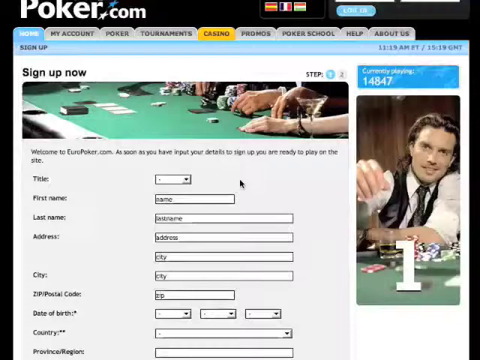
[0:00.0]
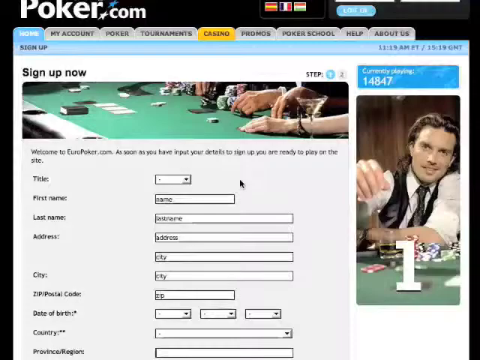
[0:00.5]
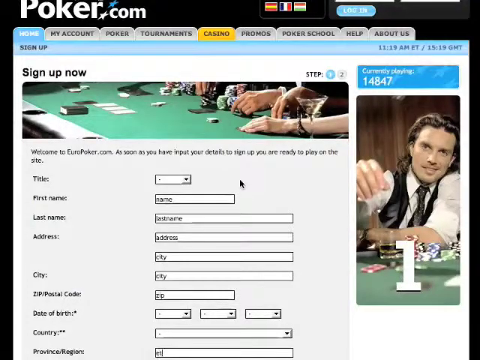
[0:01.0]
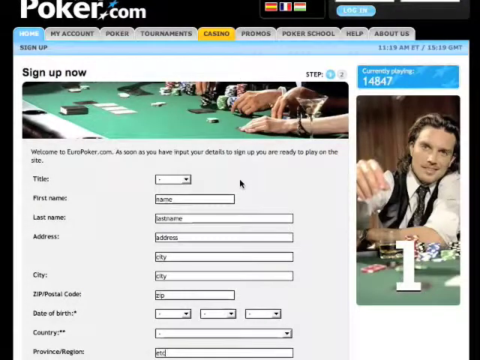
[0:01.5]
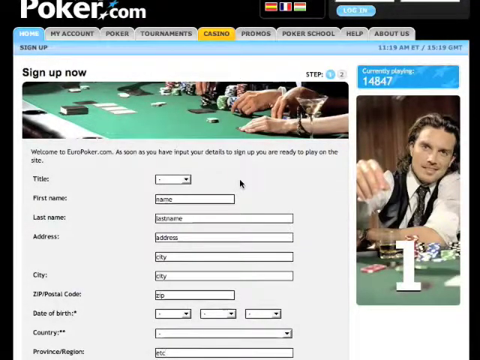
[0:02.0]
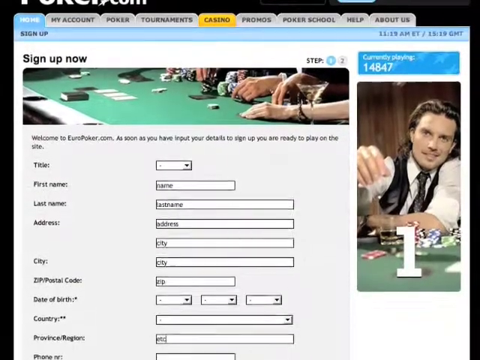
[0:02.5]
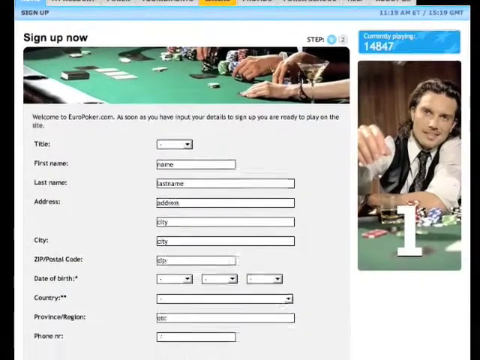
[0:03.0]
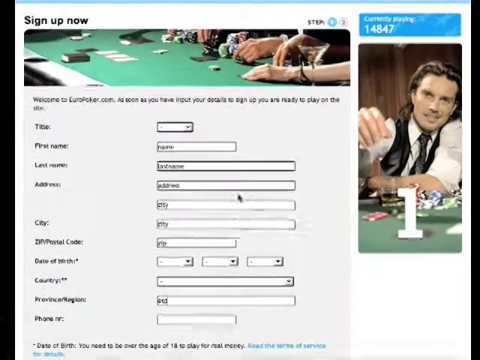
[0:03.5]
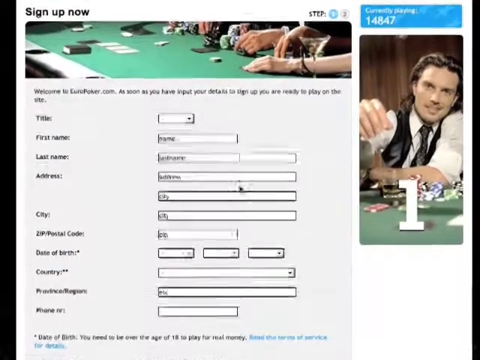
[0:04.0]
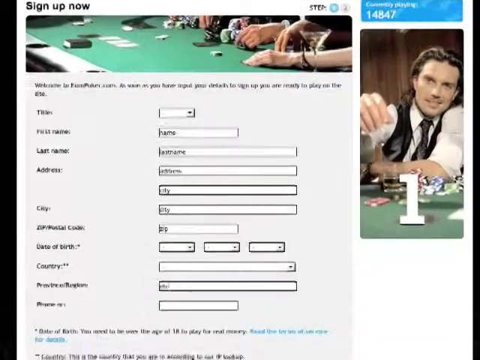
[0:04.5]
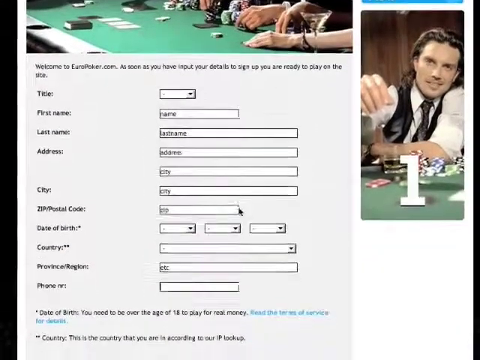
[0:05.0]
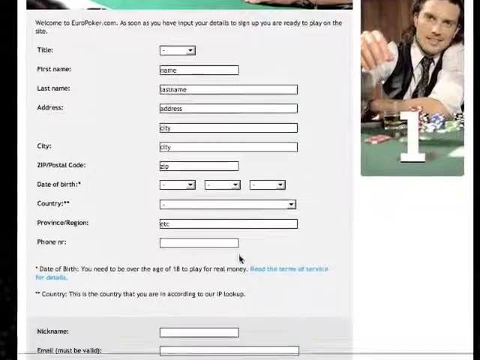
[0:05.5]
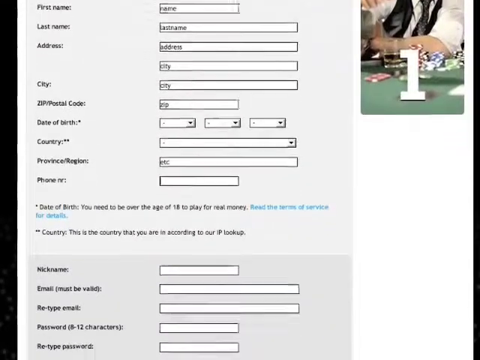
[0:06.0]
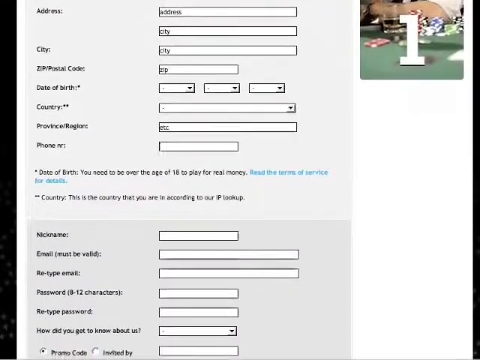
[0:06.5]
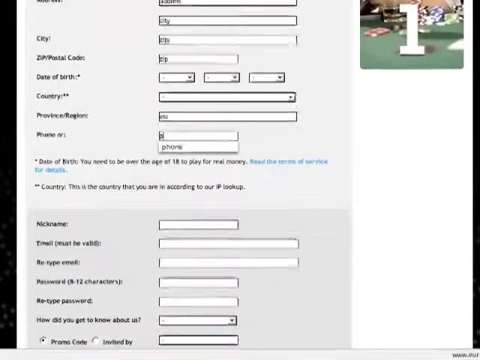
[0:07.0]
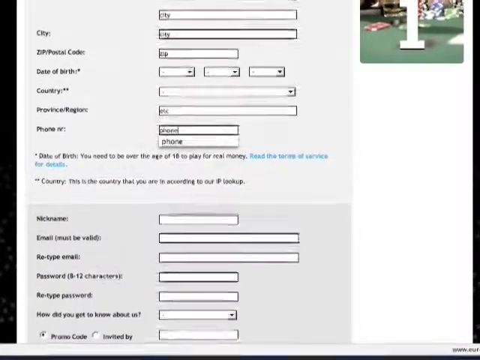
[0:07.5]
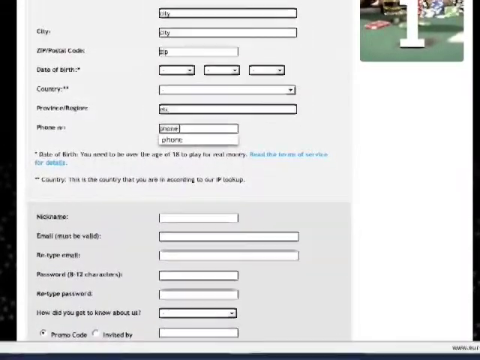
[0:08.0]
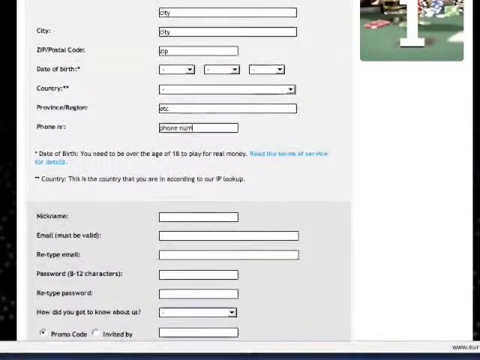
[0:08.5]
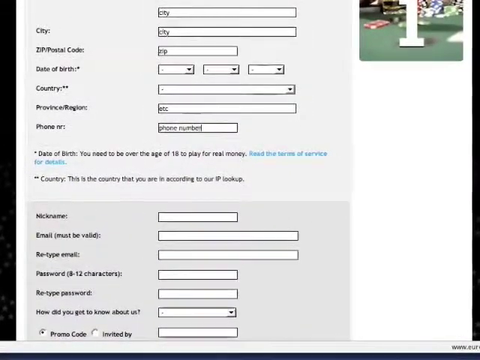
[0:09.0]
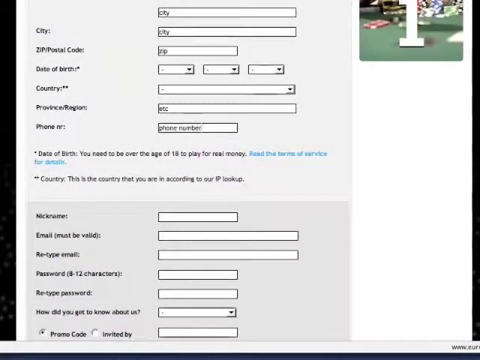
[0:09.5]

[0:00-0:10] This looks like an ad for Poker.com, perhaps a gambling website. The background is black, and "Poker.com" appears in the top left-hand corner, with the dot accentuated as a star. There are two stars: a white star representing the dot and a light blue or cyan-colored star above it at a 45-degree angle. In the middle right of the screen are options to select different languages, each with a flag; the website apparently can be viewed in German, French, and a language with an unidentified flag. A blue button reading "login" is at the right side of the top of the menu, and the menu screen appears to be in a retro Windows style. A banner ad at the top shows a blackjack-type or poker-type setup: cards on a green table, stacks of poker chips, and several hands on the table, all Caucasian. The image is cropped so that only the hands and the table are visible, and a martini is displayed at the right-hand side of the banner. Underneath the banner, text reads "welcome to poker.com, as soon as you have input your details to sign up you are ready to play online." Several labels are on the left-hand side, reading "titles, first name, last name, address, city, zip code, date of birth," and several tabs to the right of them are text boxes for the user to input the requested information. On the right-hand side of the screen is another banner ad featuring a white man wearing a white shirt, a black polka dot tie and a black vest, his hair swooped back. He appears to be smiling, and his arm reaches forward as if to grab chips or cards. Poker chips in red, blue, black and green are on a green table, both stacked and strewn randomly. There appears to be a cocktail in front of the man sitting at the table: a rocks glass with a dark liquid about two fingers full. The number "1" is prominently displayed in white at the bottom of this banner ad, and above it, blue-outlined white text reads "currently playing: 14847".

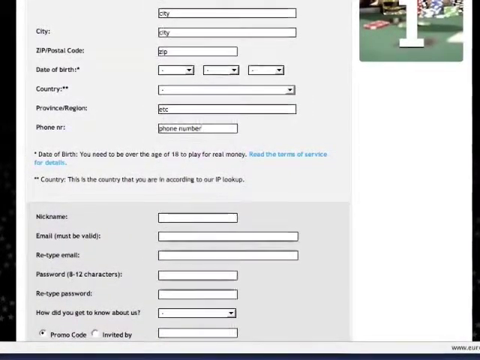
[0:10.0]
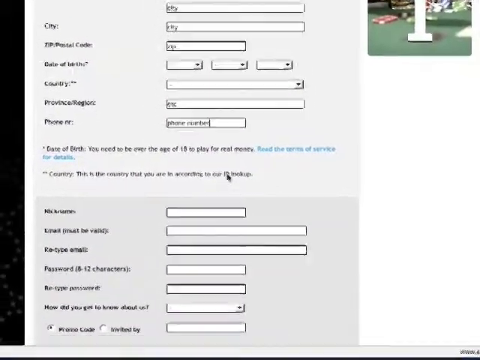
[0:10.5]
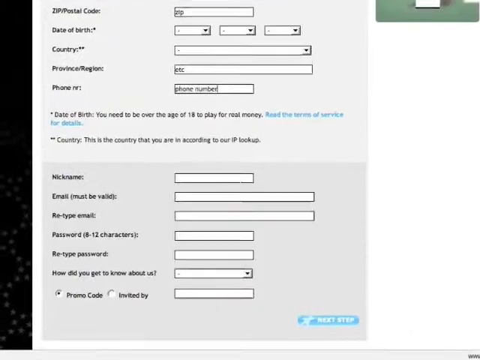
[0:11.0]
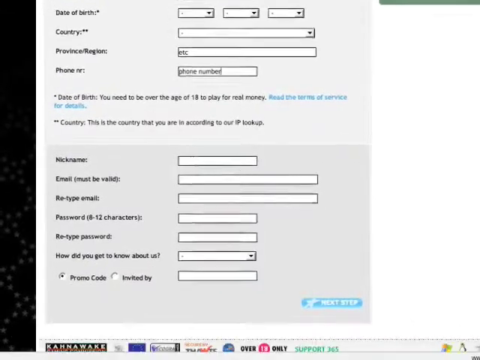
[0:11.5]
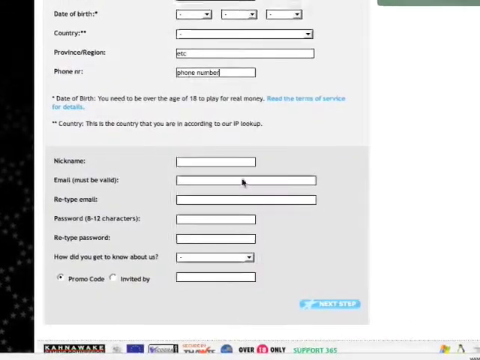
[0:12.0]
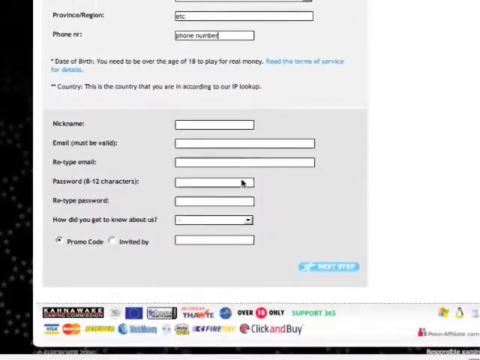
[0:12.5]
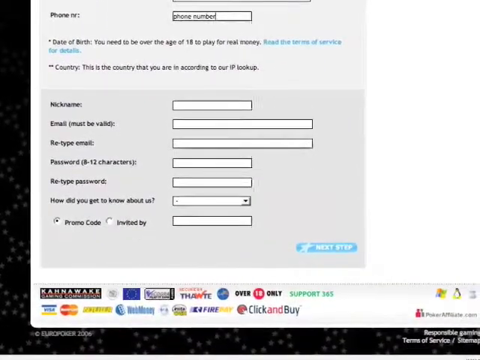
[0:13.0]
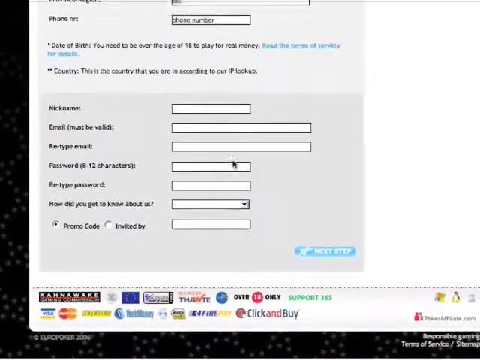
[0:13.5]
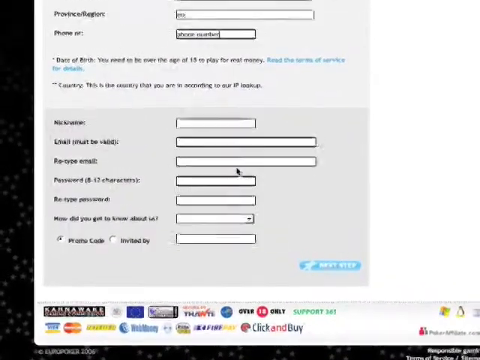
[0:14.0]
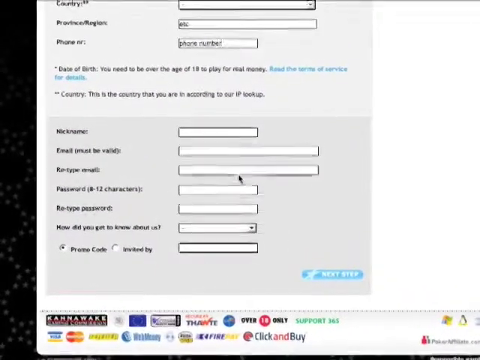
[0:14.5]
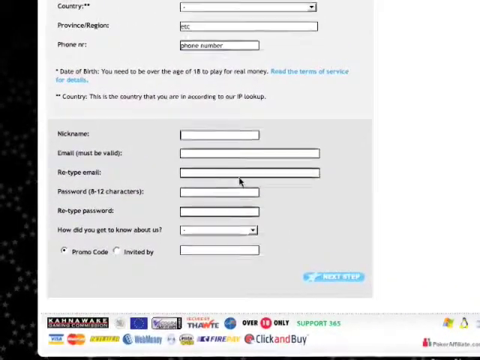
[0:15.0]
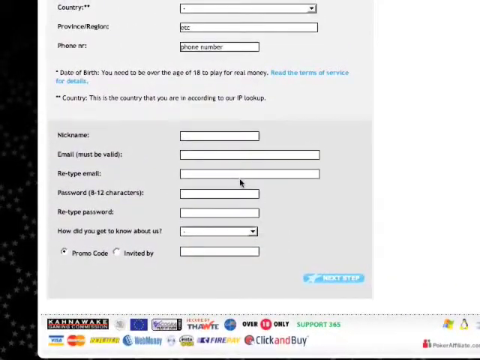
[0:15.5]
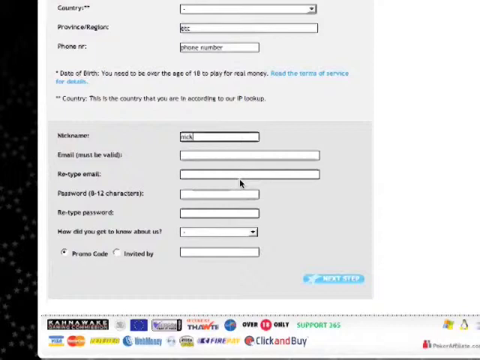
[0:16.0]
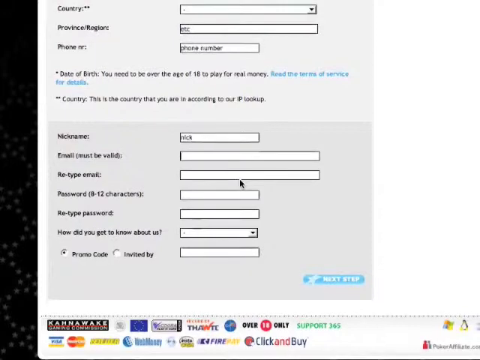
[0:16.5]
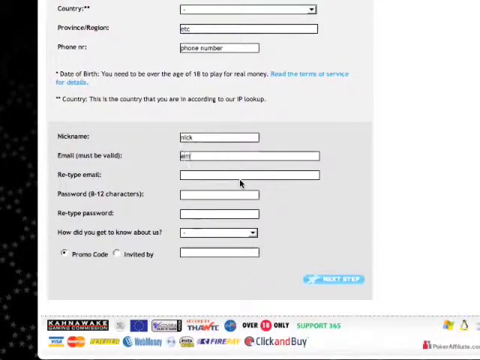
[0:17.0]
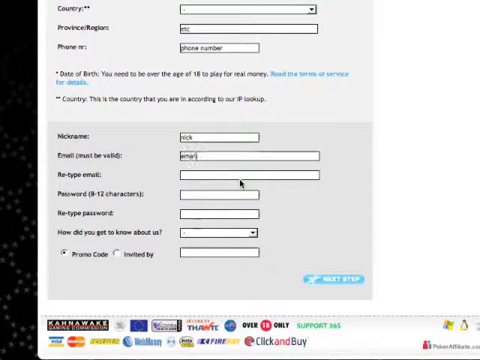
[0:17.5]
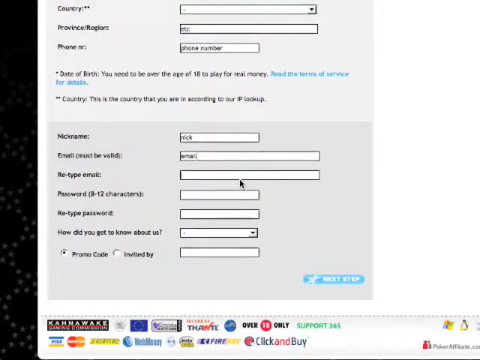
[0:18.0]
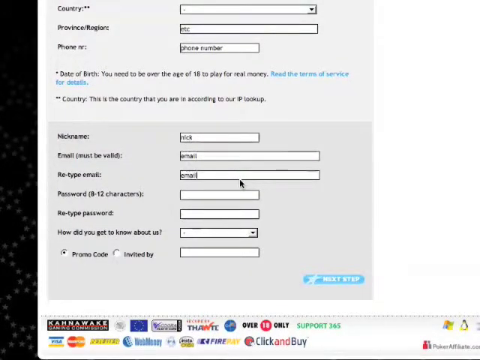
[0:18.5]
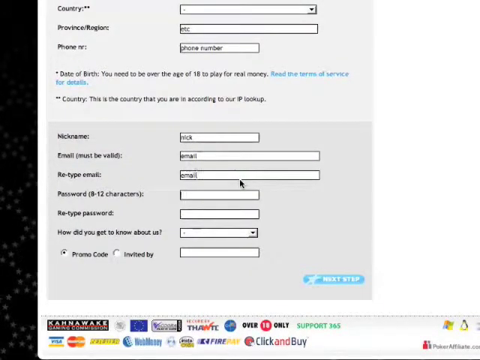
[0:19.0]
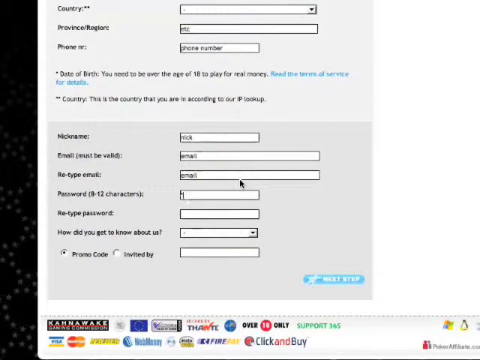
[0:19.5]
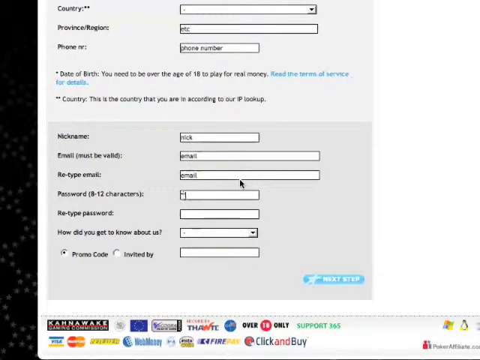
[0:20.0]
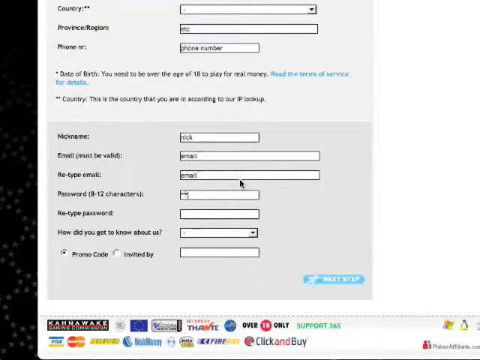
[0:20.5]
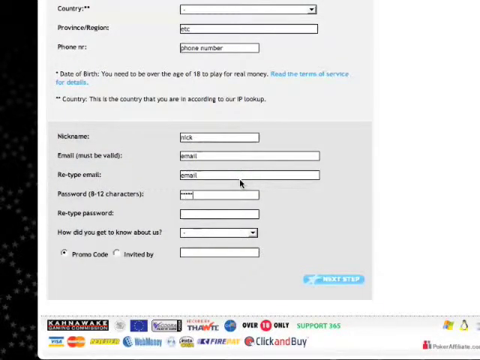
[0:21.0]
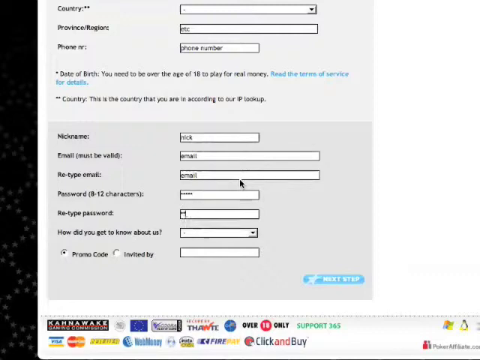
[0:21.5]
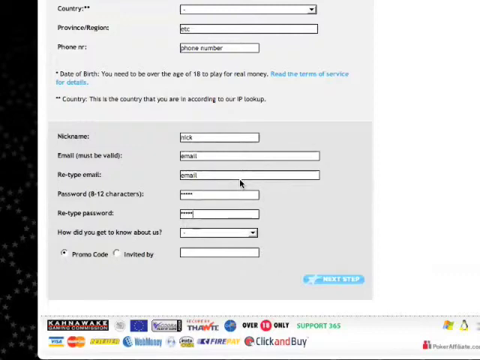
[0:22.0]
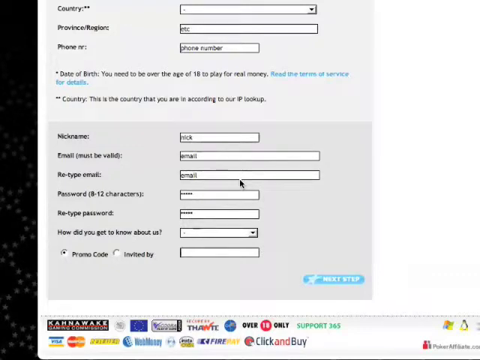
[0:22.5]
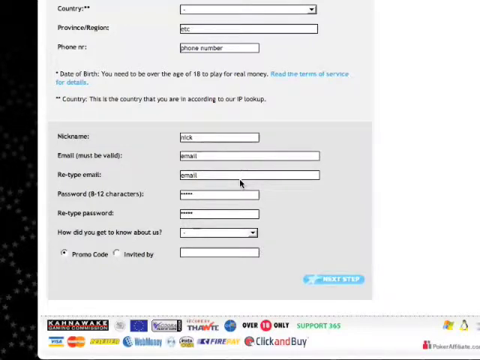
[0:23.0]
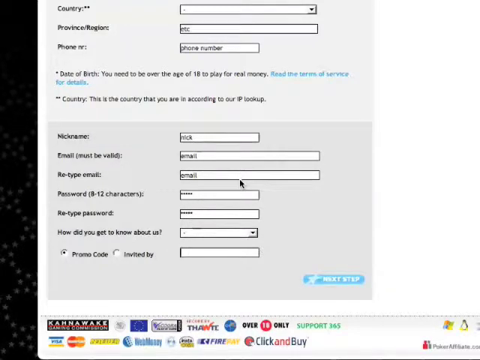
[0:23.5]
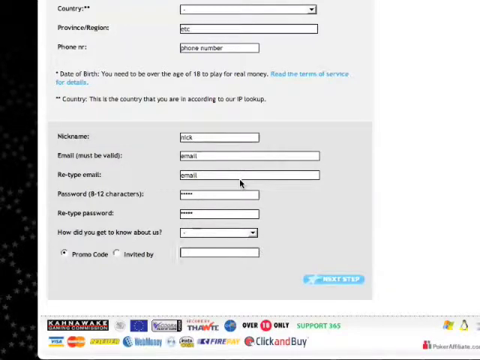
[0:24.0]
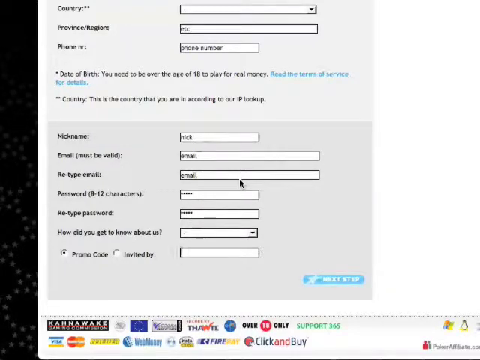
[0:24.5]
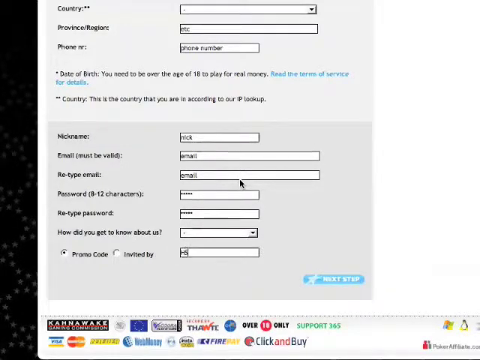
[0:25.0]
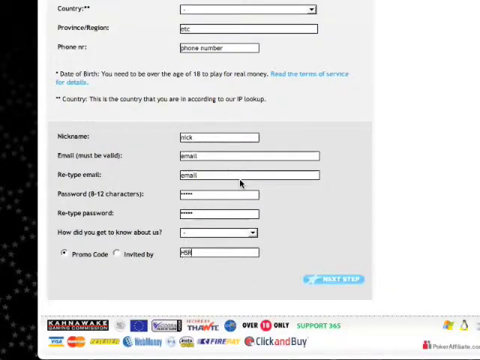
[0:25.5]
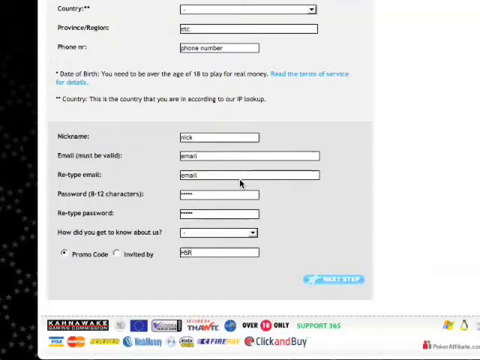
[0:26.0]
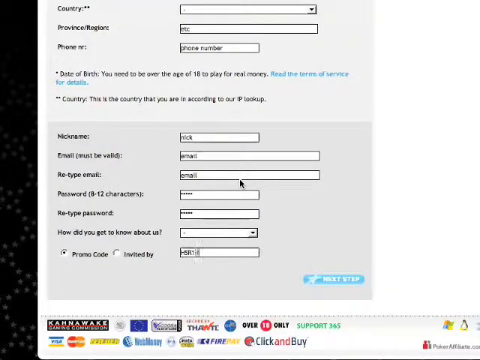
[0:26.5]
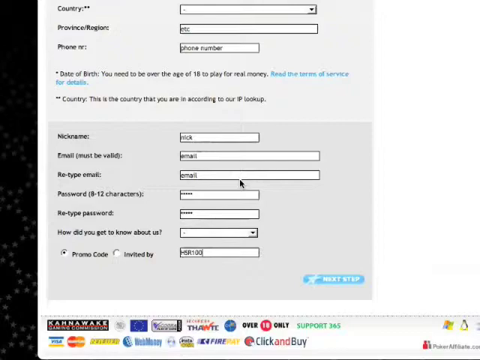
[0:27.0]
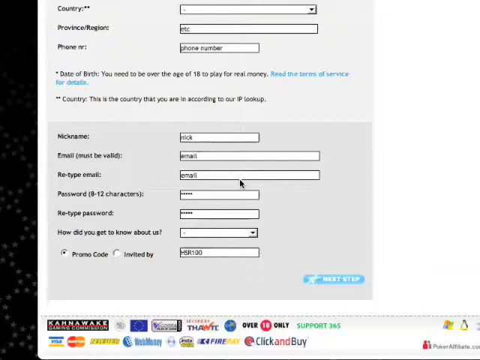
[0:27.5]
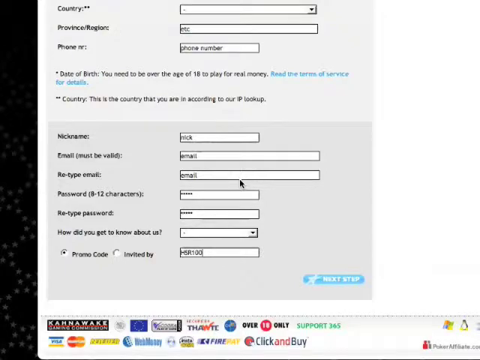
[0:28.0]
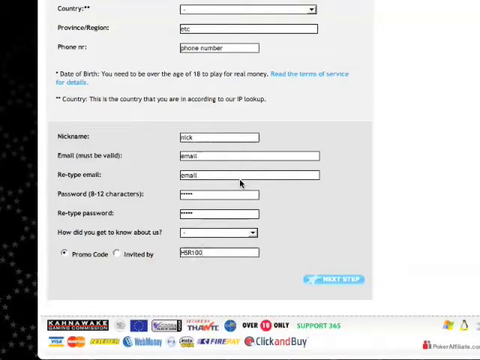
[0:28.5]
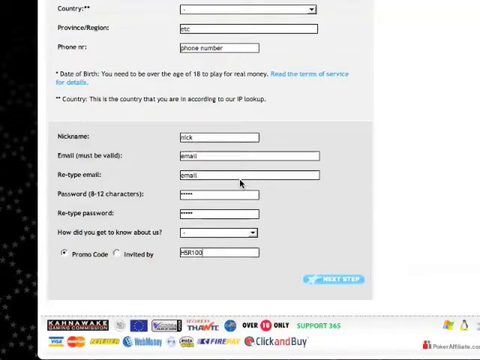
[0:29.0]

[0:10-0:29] The cursor is prominently displayed in the middle of the screen as the user slowly scrolls down and appears to enter dummy information into the text boxes, seemingly to demonstrate how to enter information in order to use the service. The requested information includes name, address, country, telephone number, nickname, email and password, ending with a promo code. The website has an old Windows style, appearing almost retro with its plain text boxes and spacing. The background is primarily black, accented with white; the text form is gray, the text in the middle is black, and the input boxes are white with black text entered into them. The user scrolls down to the bottom, where there is an option to click for the next step. That button is light blue, the same as the other text accents on the screen.